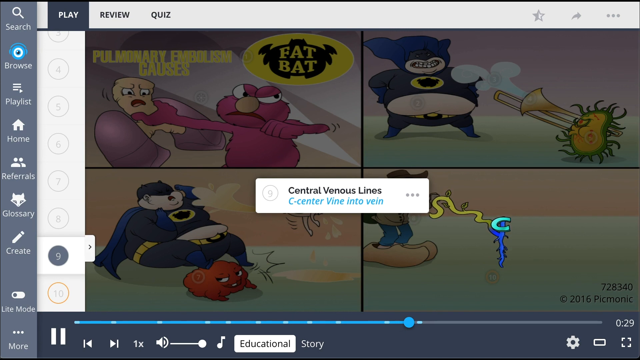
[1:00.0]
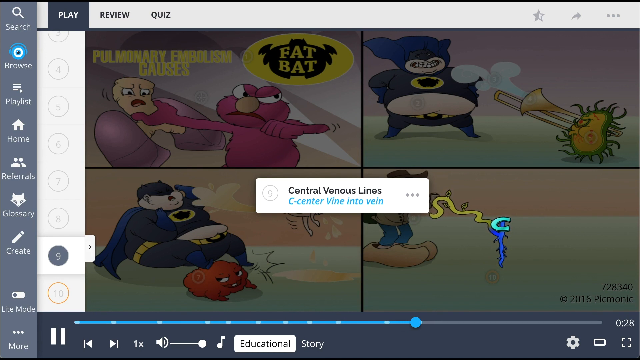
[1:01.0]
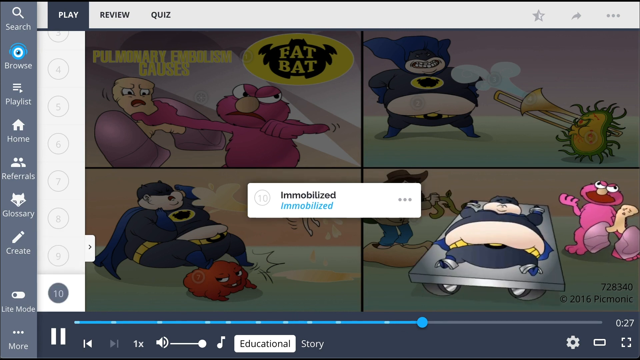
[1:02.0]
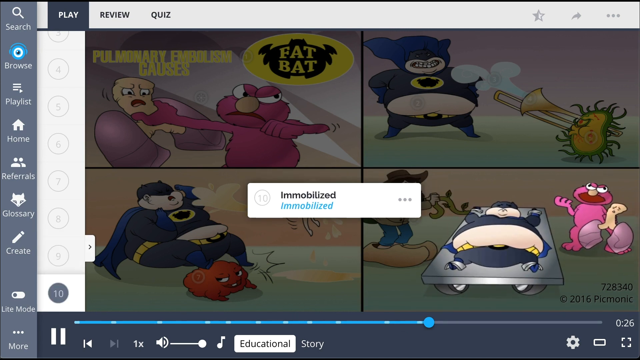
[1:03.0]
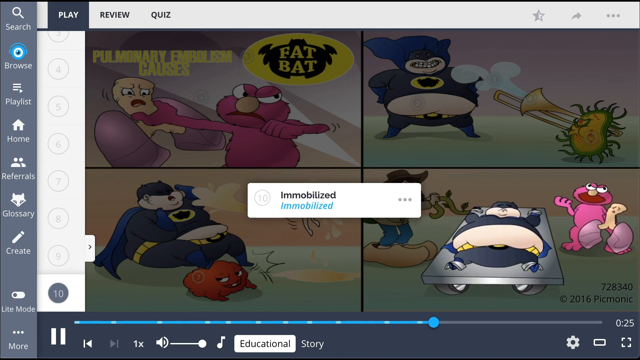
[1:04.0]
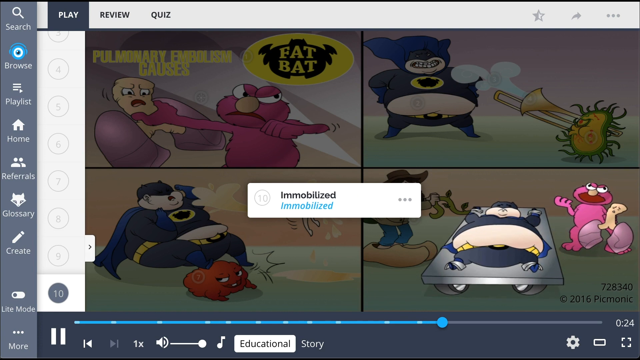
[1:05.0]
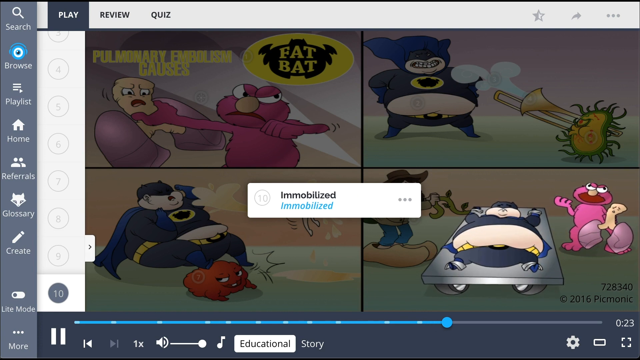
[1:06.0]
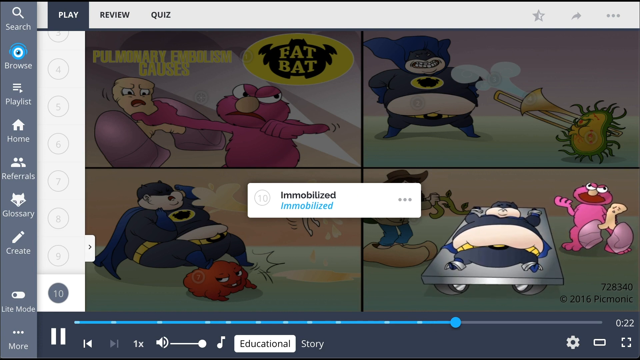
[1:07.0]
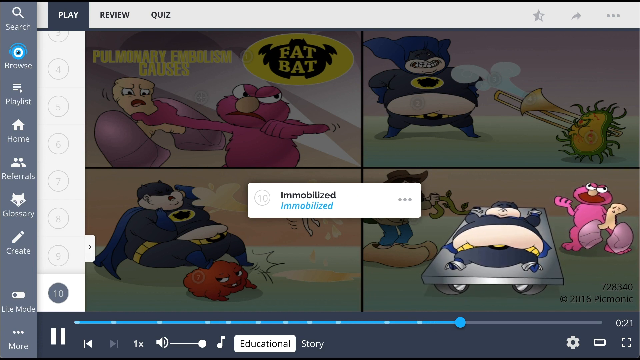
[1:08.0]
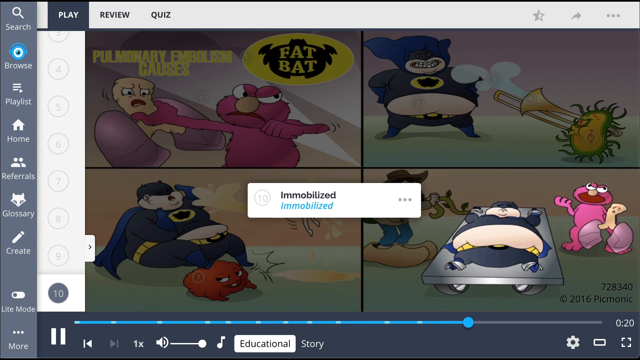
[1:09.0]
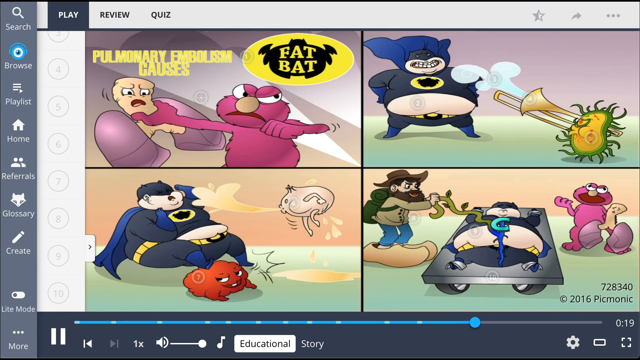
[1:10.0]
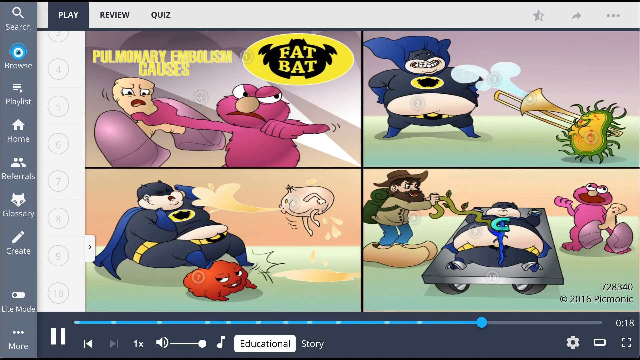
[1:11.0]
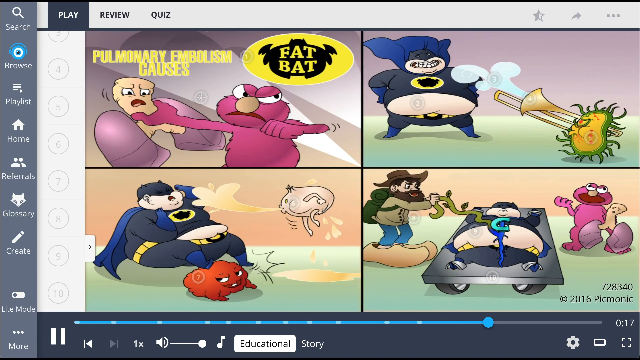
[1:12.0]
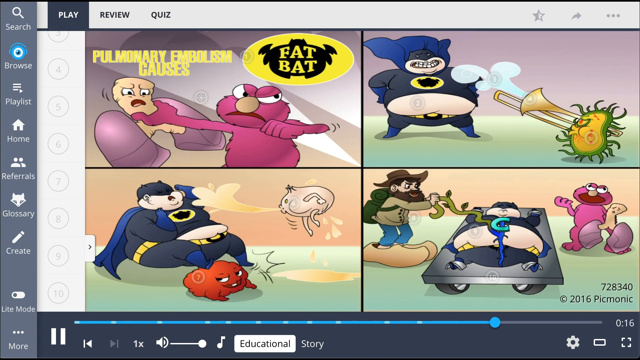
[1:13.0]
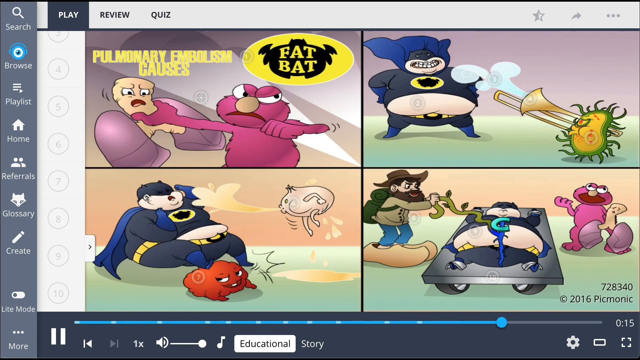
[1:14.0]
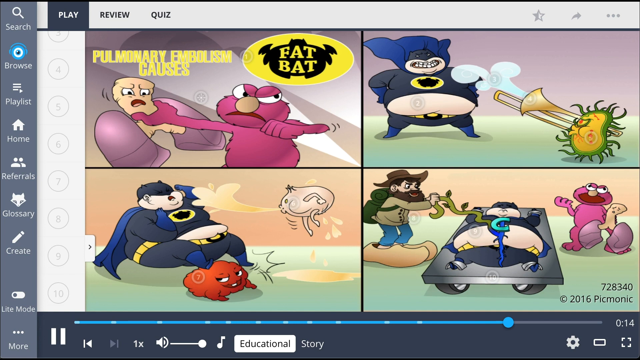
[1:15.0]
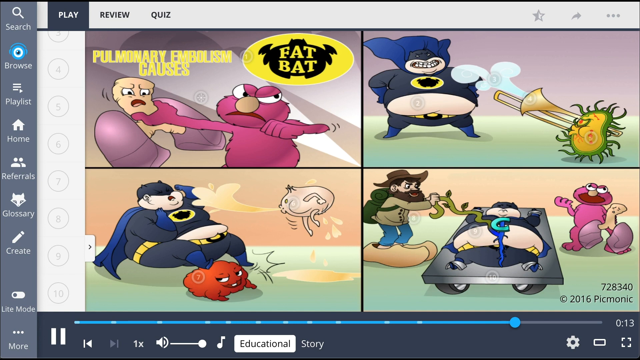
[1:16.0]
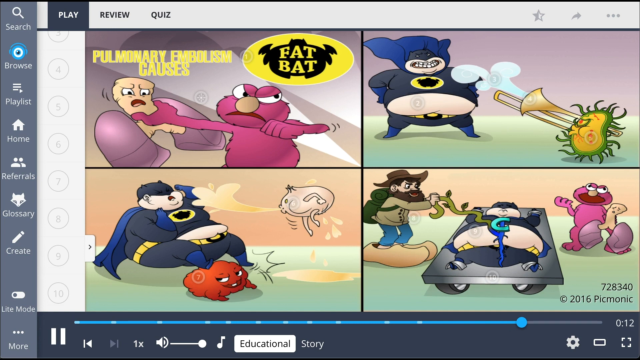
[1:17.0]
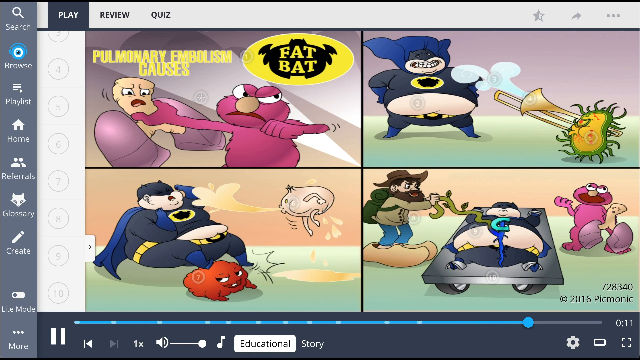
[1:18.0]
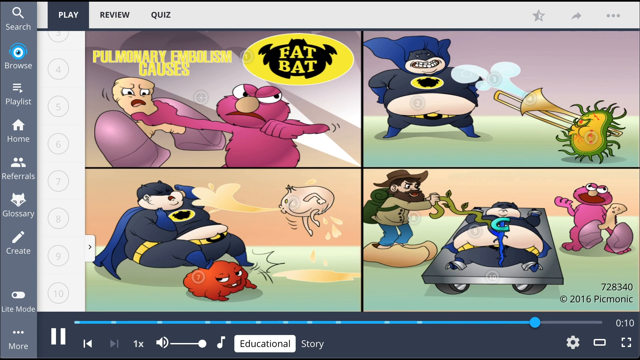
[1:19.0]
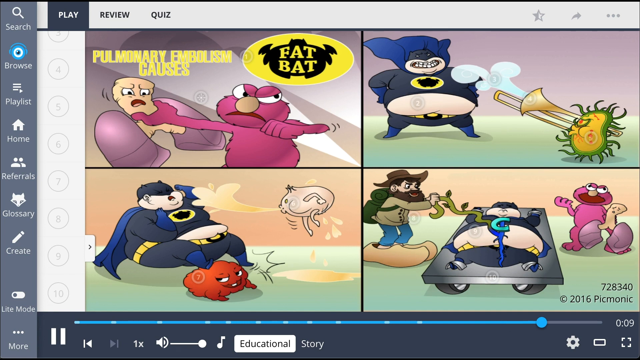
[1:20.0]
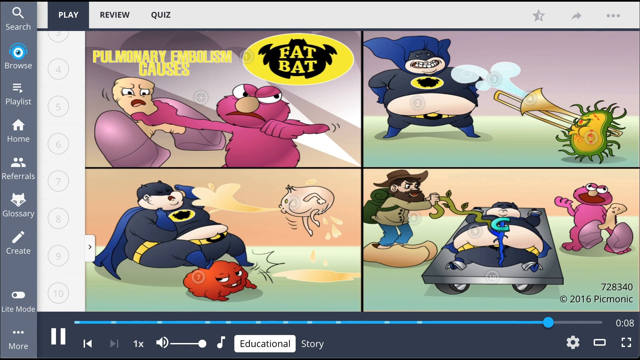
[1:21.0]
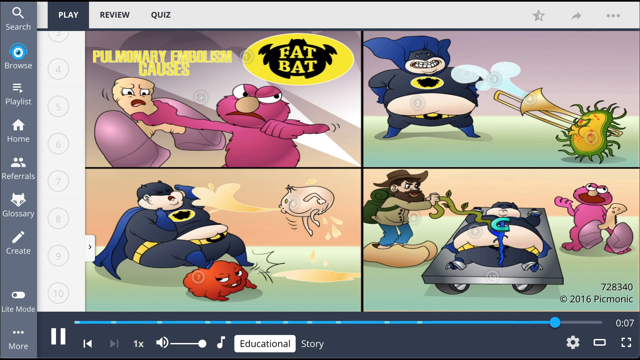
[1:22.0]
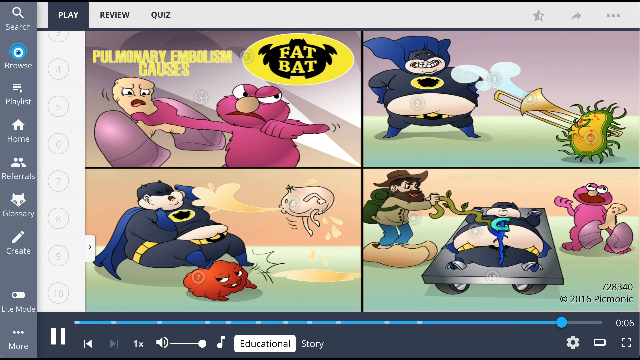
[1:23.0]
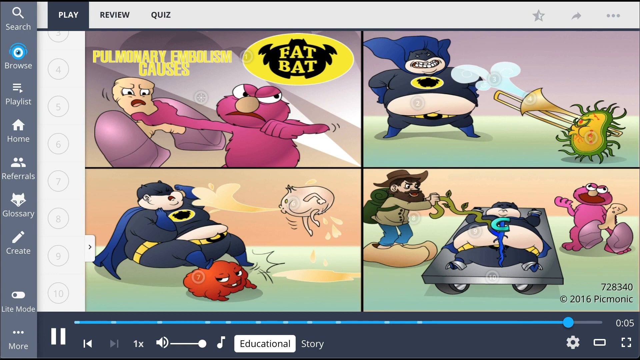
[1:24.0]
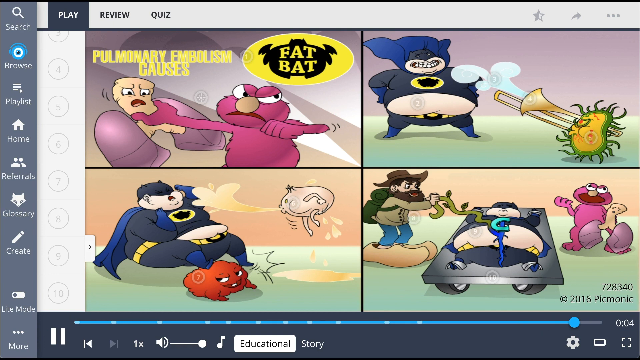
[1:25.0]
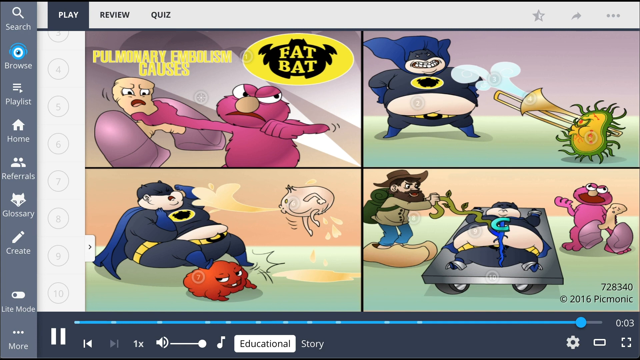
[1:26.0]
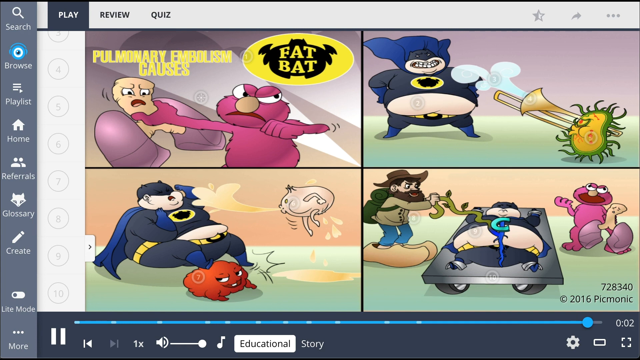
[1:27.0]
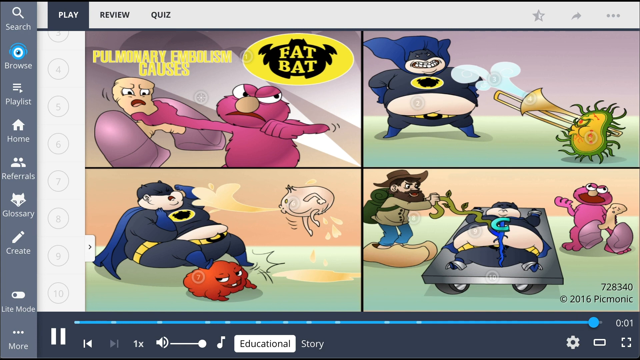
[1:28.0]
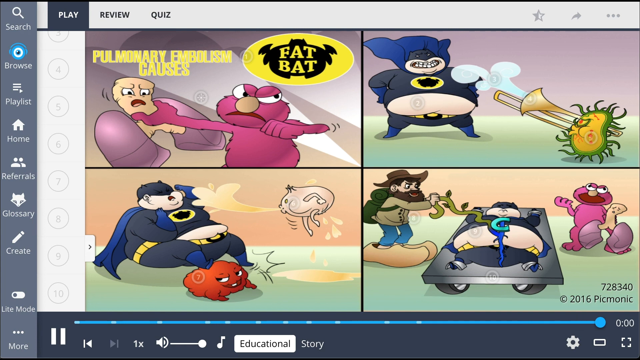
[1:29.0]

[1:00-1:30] The scene shows four comic book squares. The first is Elmo fighting some lungs; the second is a bacteria breathing onto Batman; the third is Batman, having fallen, getting amniotic fluid breathed on him, with a tumor right by him; the fourth is a man with big shoes holding a vine, and Batman getting taped to the table with Elmo in the lungs right by him. The scene stays on screen for a while. In the corner is the number "728340," along with "2016" and "Picmonic." The scene apparently explains how a pulmonary embolism happens using various cartoon characters. Elmo is red, the lung is tan and light purple, and Batman is very fat. The man in the big shoes has a big bushy beard, the tumor is red, and a white onion is breathing amniotic fluid.